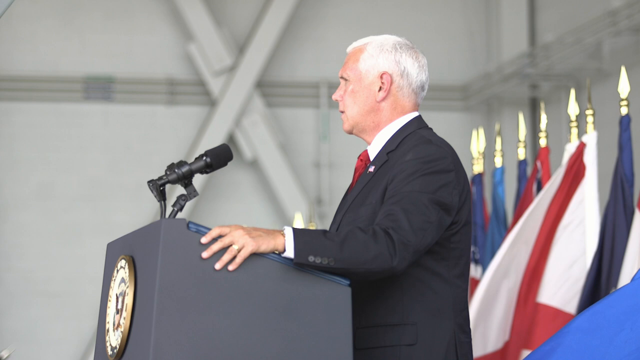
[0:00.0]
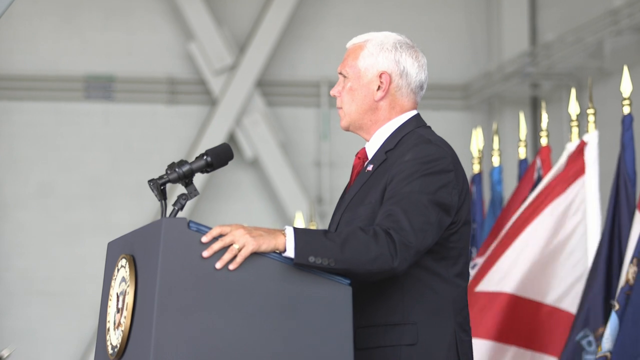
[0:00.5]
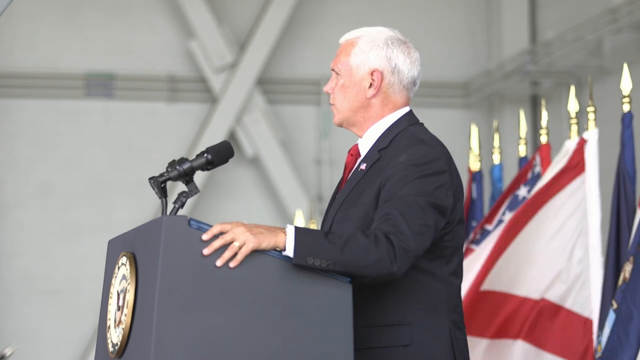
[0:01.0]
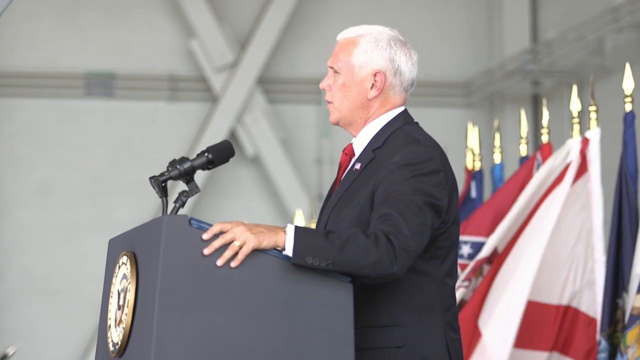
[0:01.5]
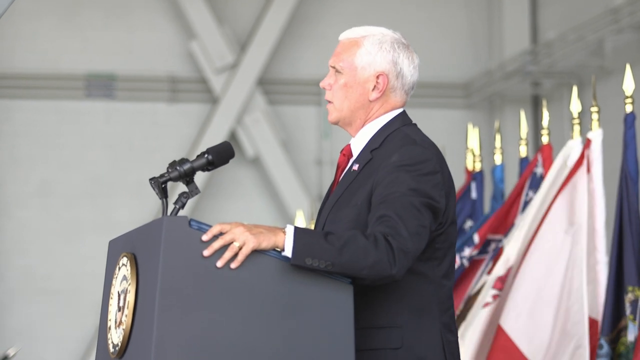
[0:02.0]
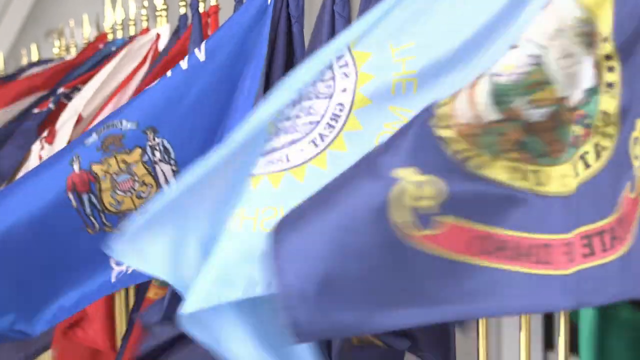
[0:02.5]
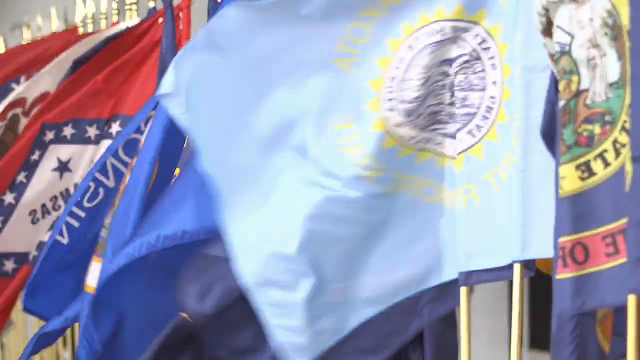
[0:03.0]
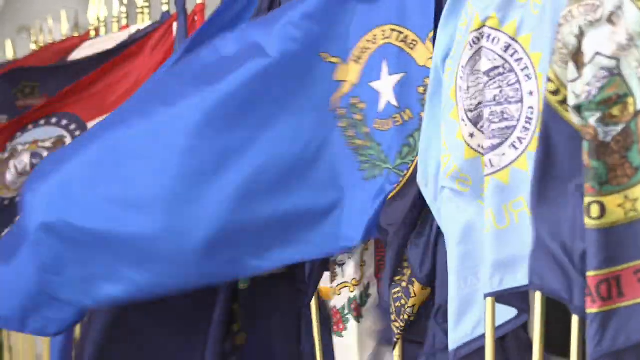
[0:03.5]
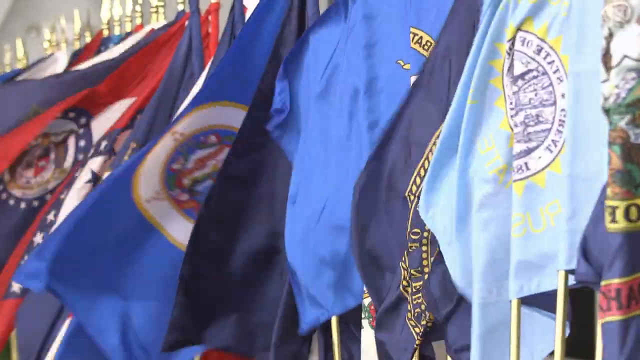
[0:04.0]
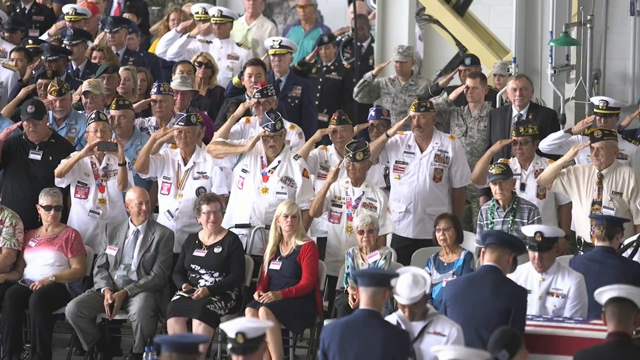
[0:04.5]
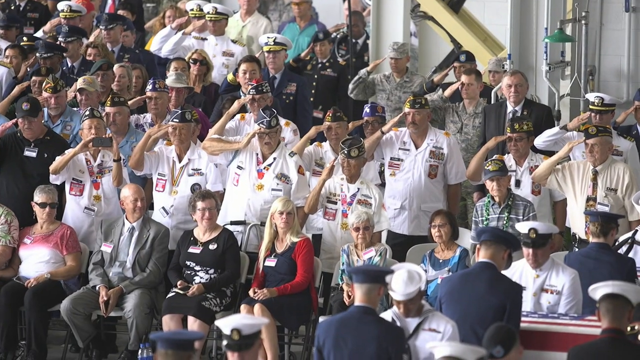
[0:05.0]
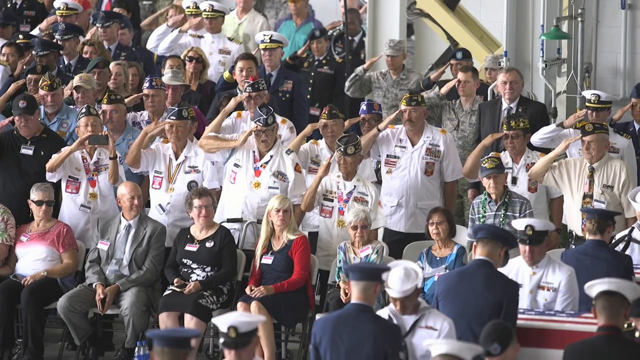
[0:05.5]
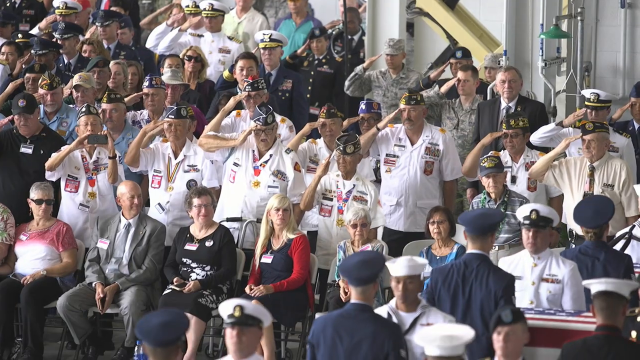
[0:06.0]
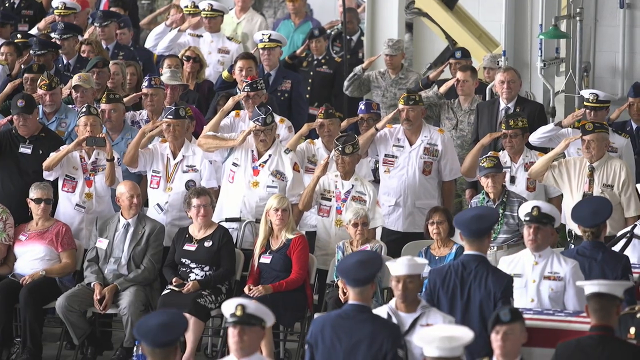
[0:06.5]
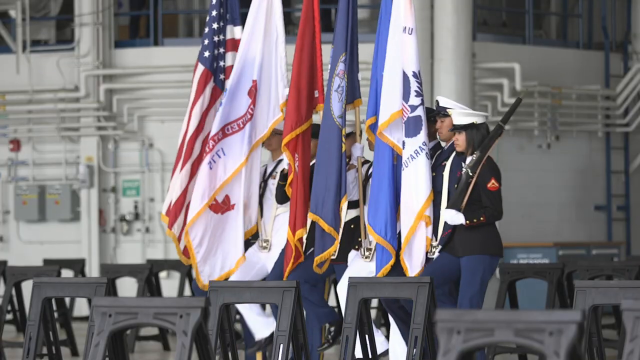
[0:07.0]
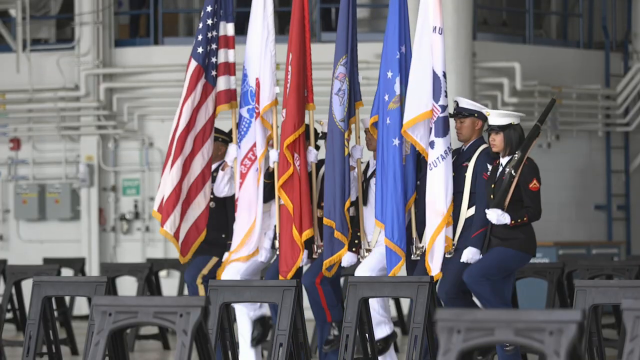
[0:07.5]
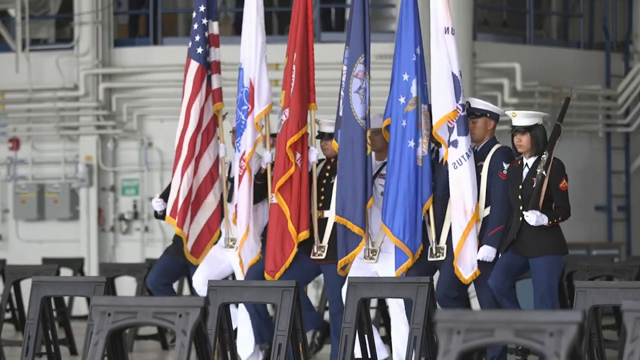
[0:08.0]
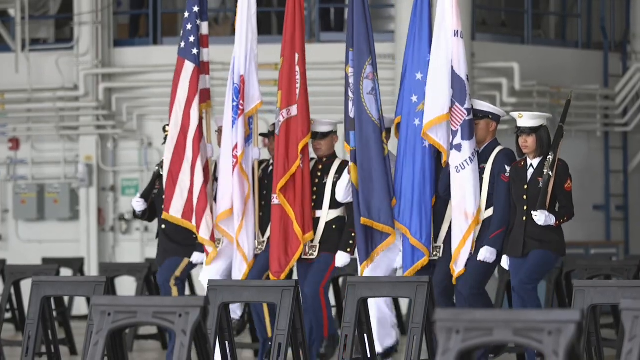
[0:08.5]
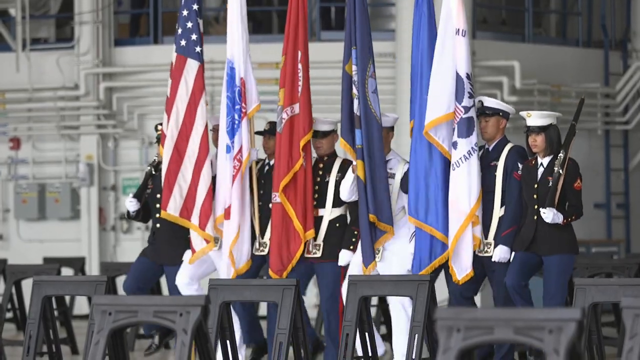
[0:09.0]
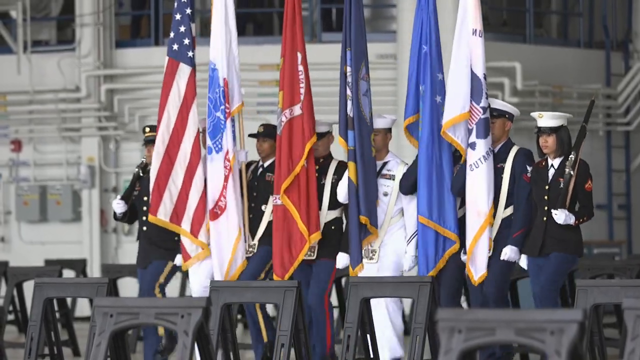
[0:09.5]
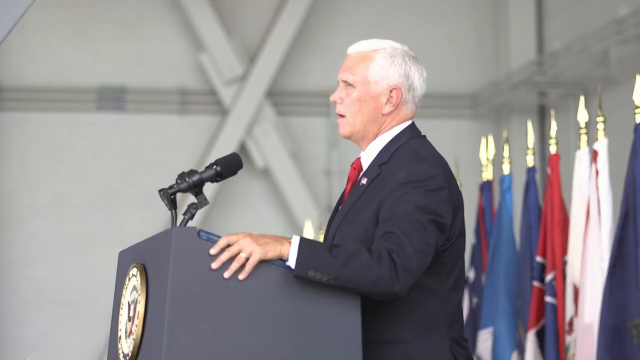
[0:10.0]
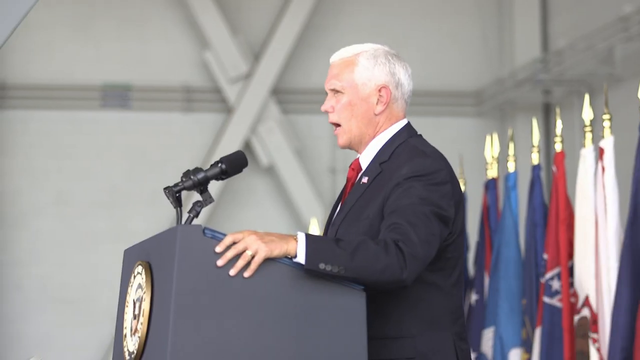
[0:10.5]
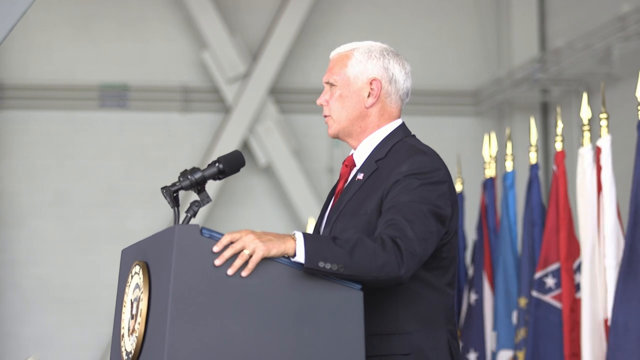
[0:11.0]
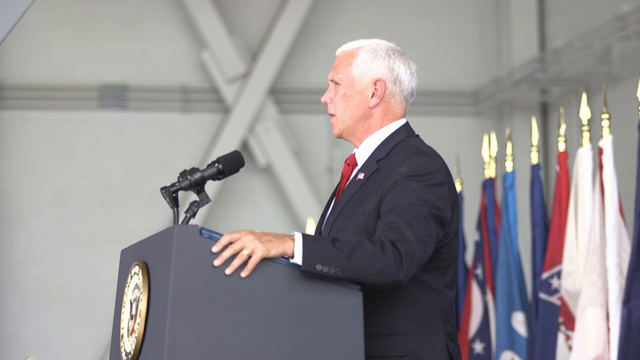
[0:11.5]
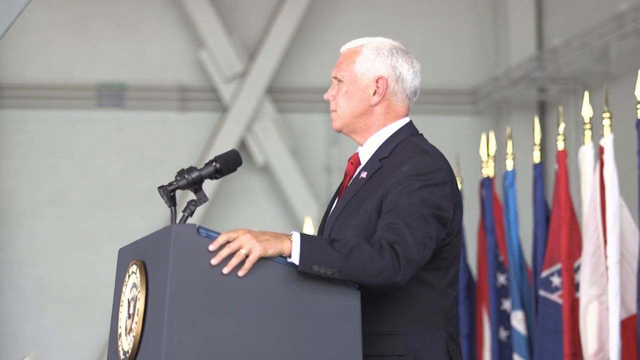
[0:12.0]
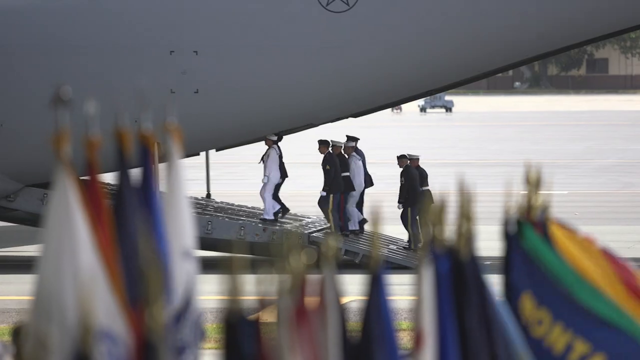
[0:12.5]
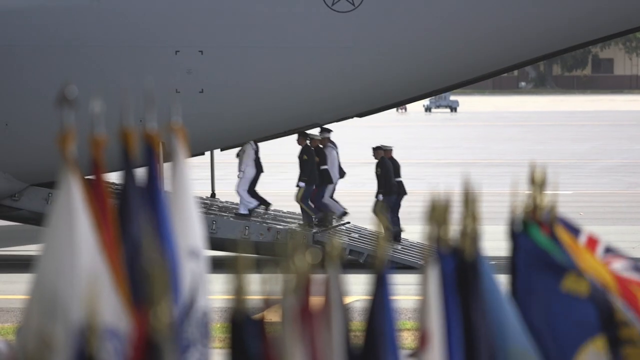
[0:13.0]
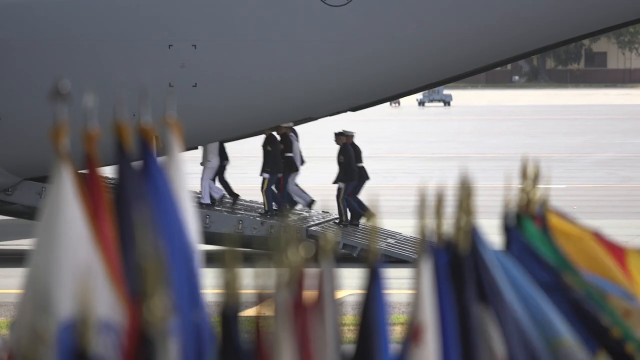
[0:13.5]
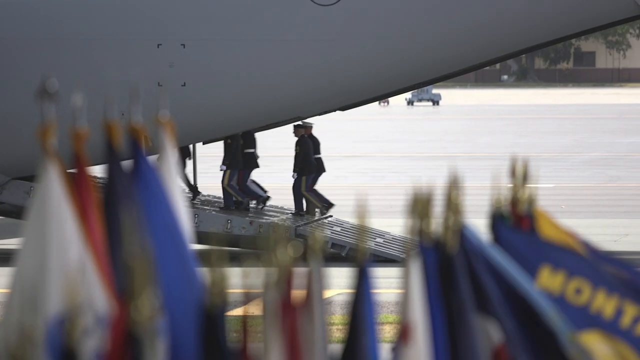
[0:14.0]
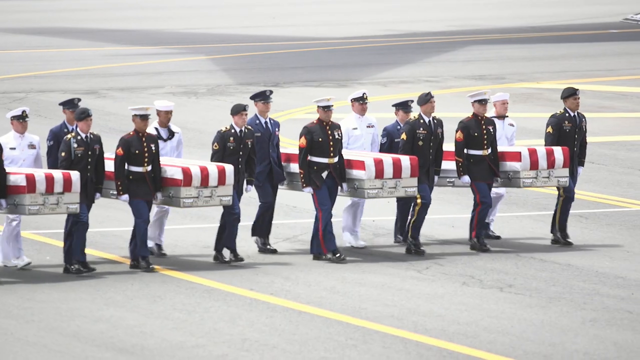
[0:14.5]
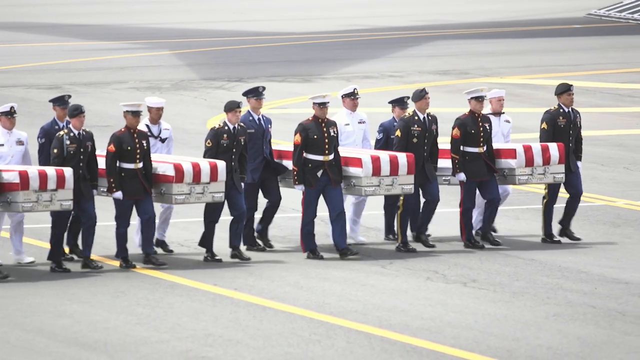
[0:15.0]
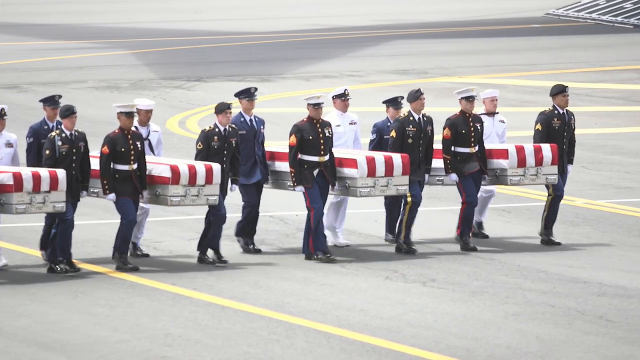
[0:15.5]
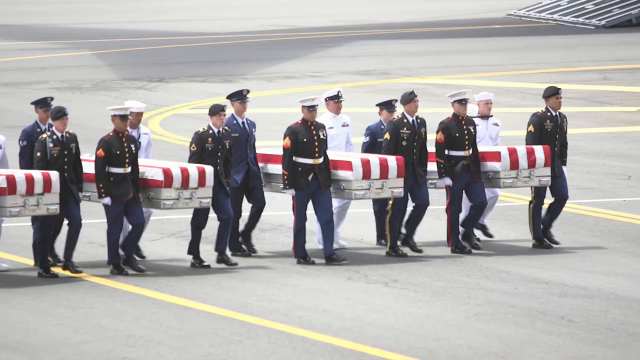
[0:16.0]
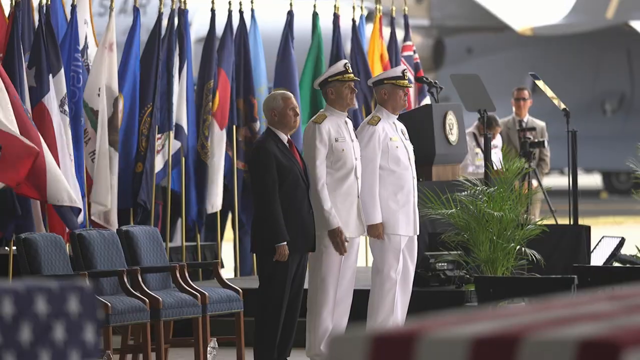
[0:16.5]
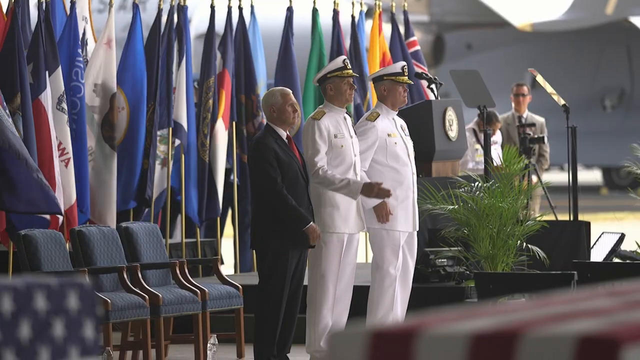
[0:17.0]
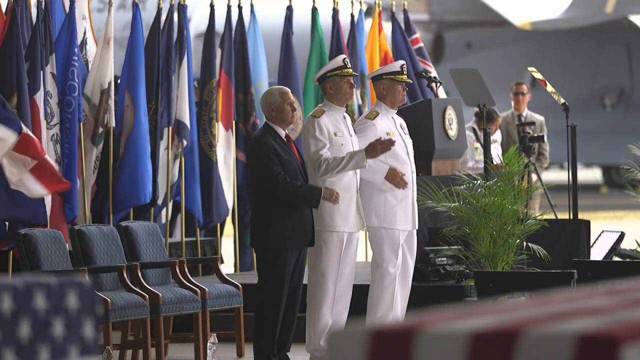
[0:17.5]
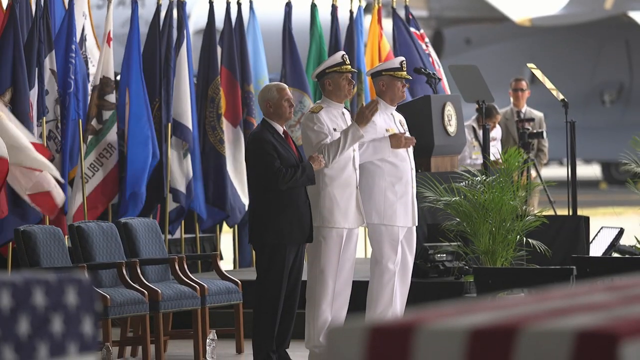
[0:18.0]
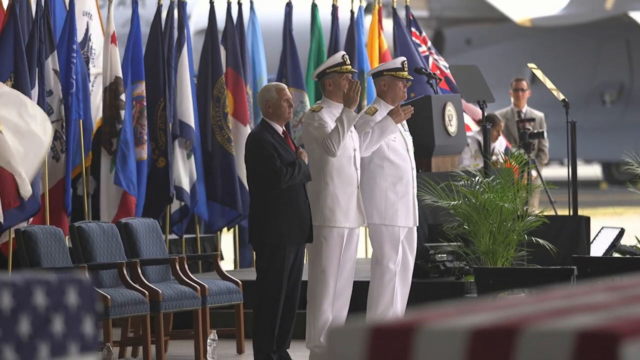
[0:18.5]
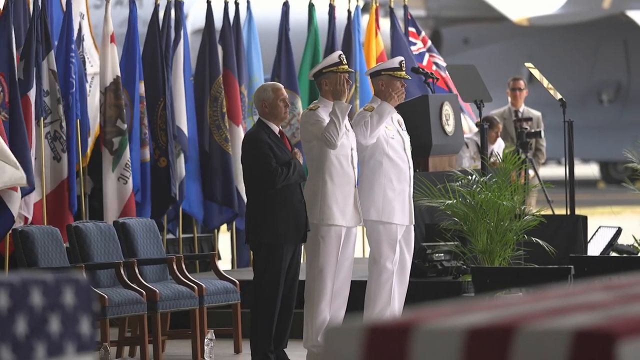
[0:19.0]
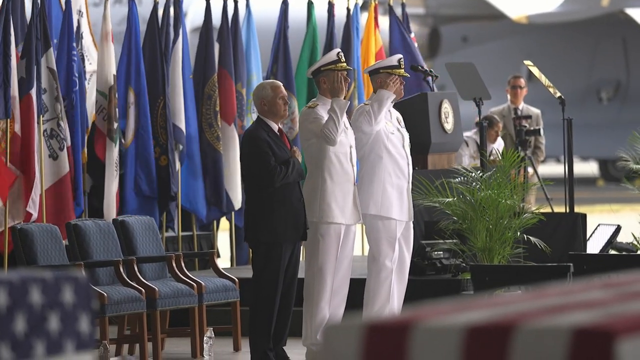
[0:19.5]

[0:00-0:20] A man, who seems to be the president of a certain country, gives a speech in front of everyone about a national disaster. Flags of different countries are raised, and soldiers march holding flags. Soldiers get inside an airplane holding coffins. Behind the standing man there is a flag. People salute and march; soldiers march inside the place where they are being addressed. There is a tent they were standing in, with people sitting down and an image by them. The coffins are covered with red and white flags. Soldiers wearing different suits move machines with the coffins while people salute. On two different sides are a woman and a man holding big guns; they wear uniforms that seem to be army uniforms. Some people wear white uniforms and others wear different uniforms. A group appears to be a mix of military personnel and civilians, some in military uniforms and others in civilian attire, and some of them are sitting. A man in a suit stands at a podium with a microphone; he has white hair and wears a dark blue suit, a white shirt and a red tie. Behind him are several flags, apparently representing the United States of America.